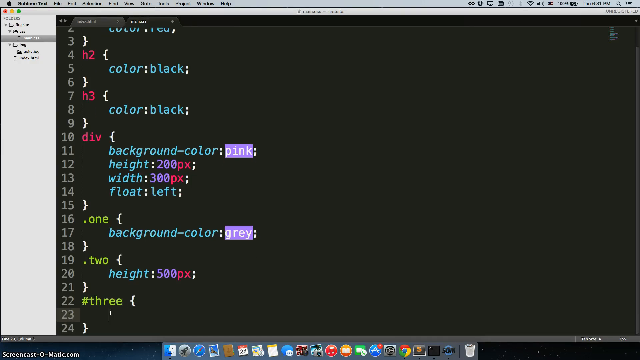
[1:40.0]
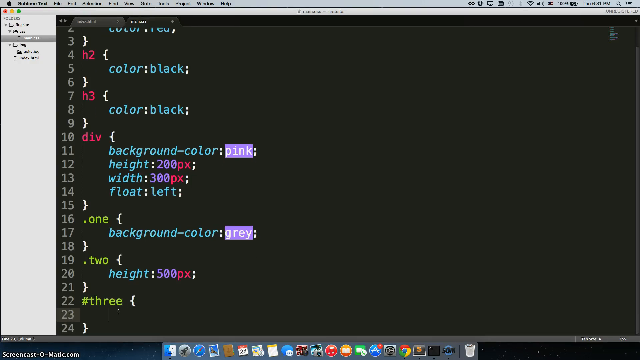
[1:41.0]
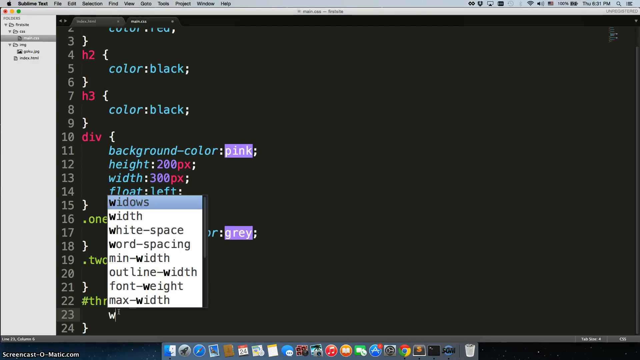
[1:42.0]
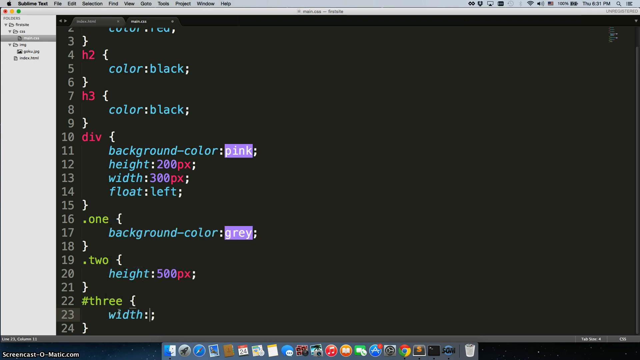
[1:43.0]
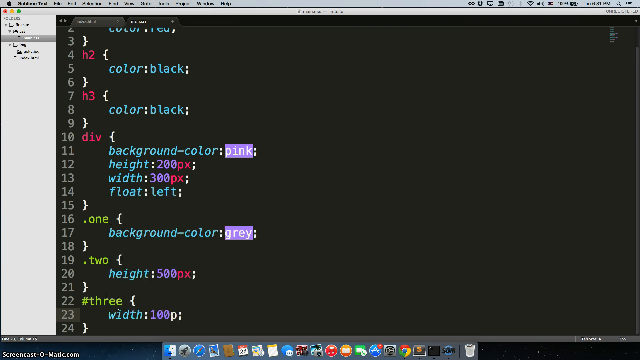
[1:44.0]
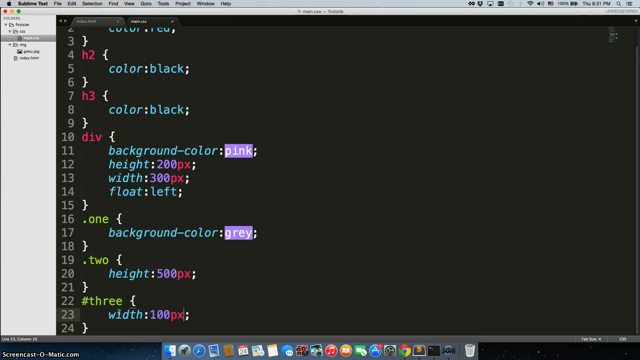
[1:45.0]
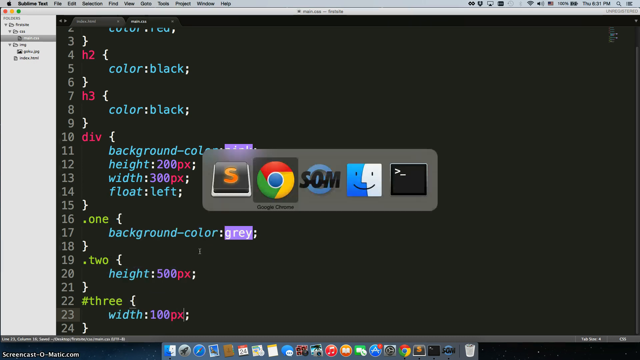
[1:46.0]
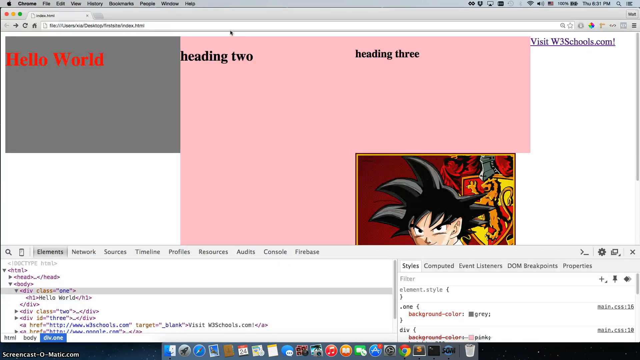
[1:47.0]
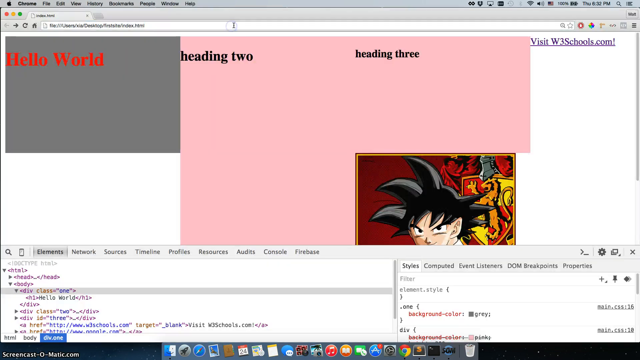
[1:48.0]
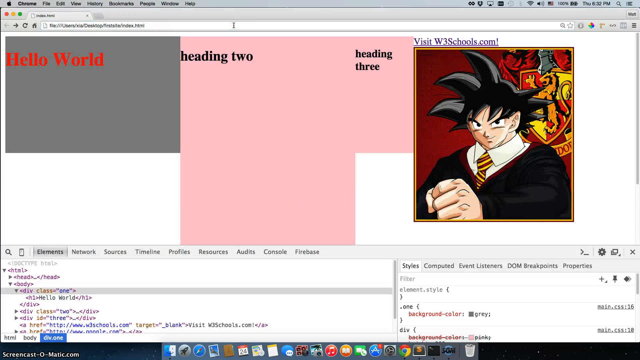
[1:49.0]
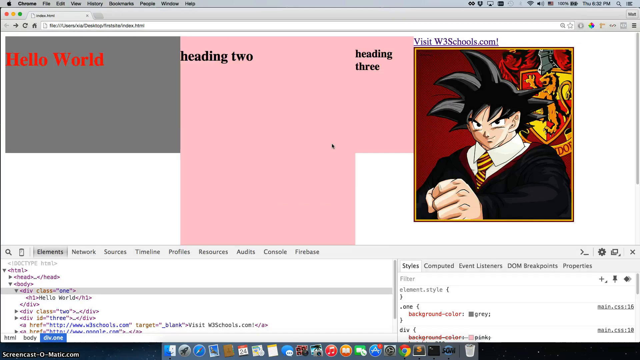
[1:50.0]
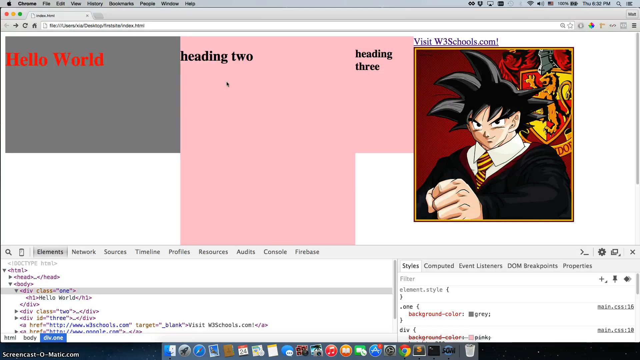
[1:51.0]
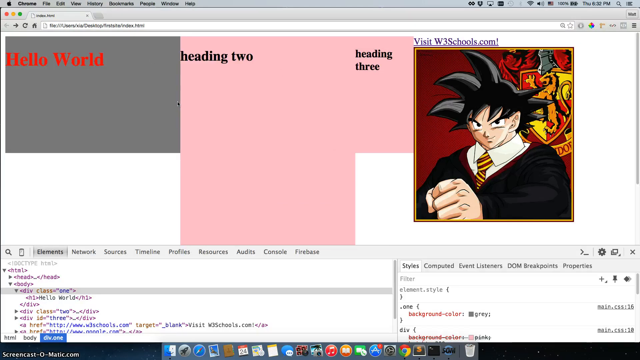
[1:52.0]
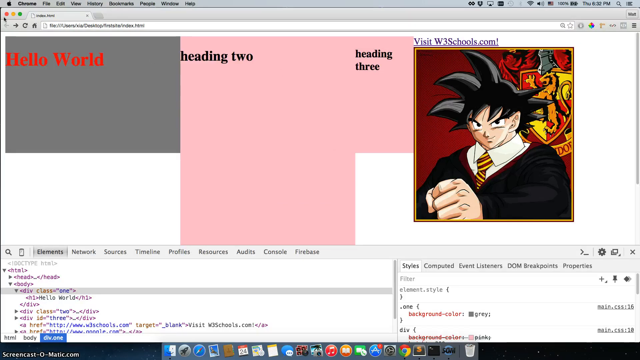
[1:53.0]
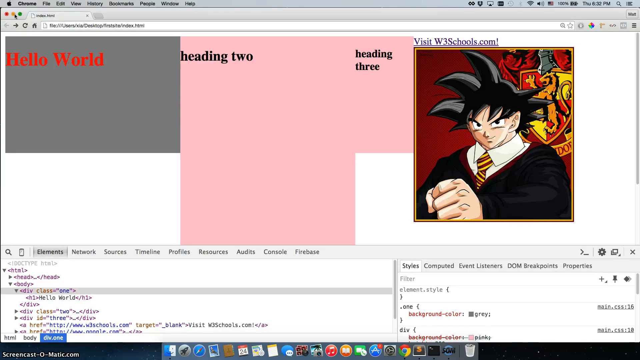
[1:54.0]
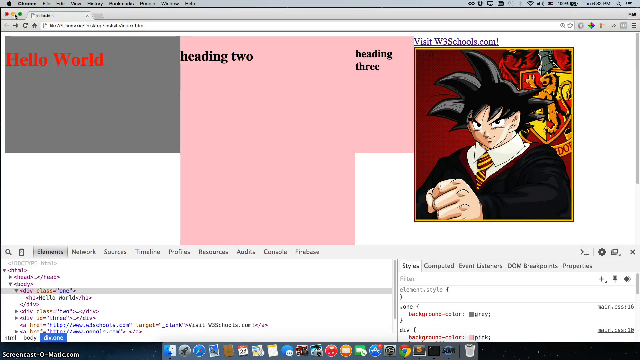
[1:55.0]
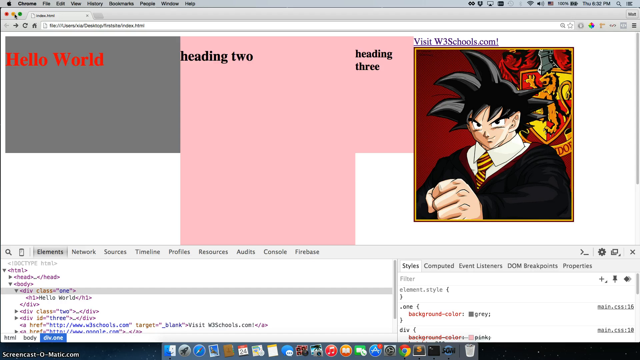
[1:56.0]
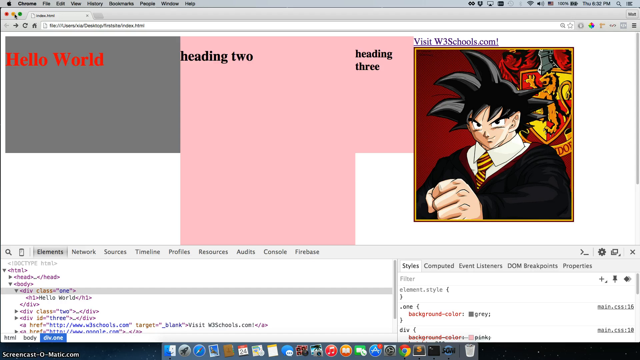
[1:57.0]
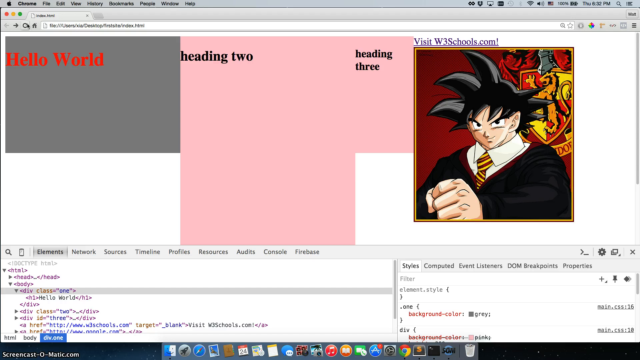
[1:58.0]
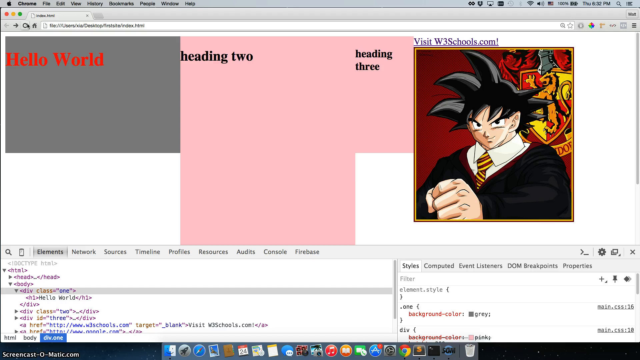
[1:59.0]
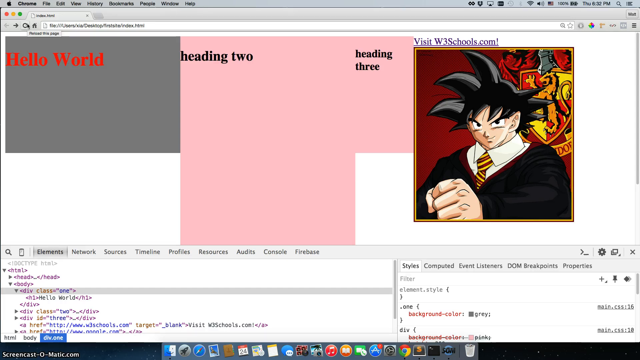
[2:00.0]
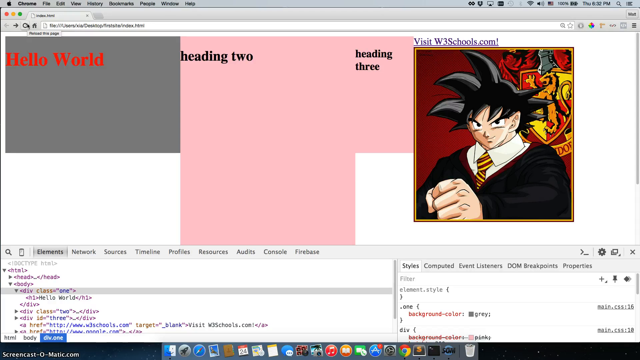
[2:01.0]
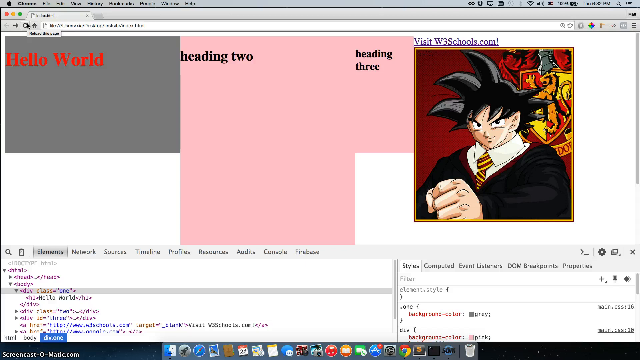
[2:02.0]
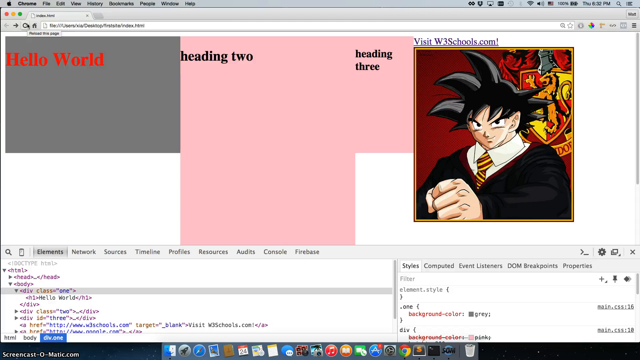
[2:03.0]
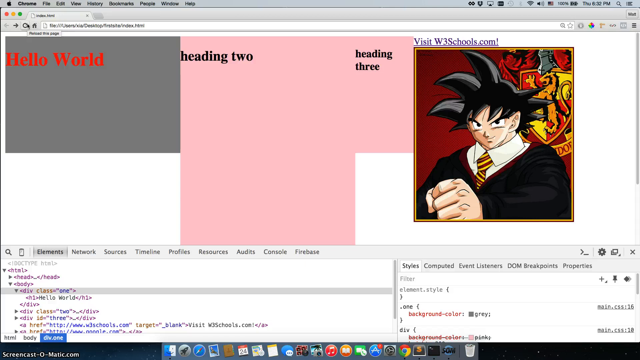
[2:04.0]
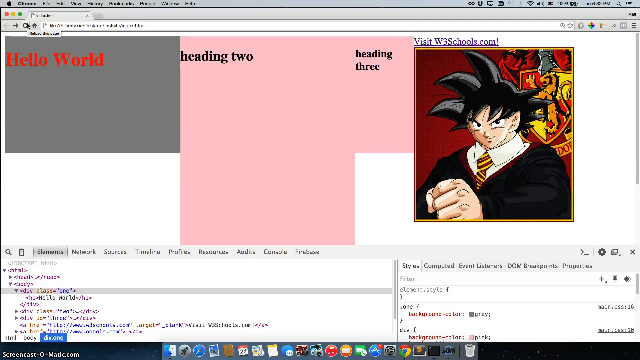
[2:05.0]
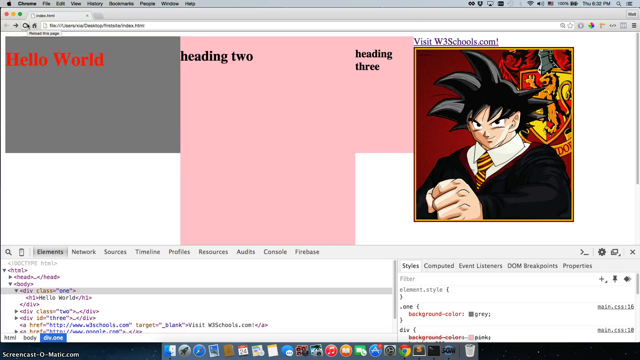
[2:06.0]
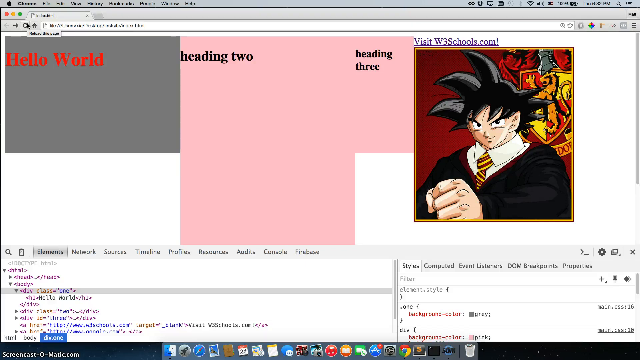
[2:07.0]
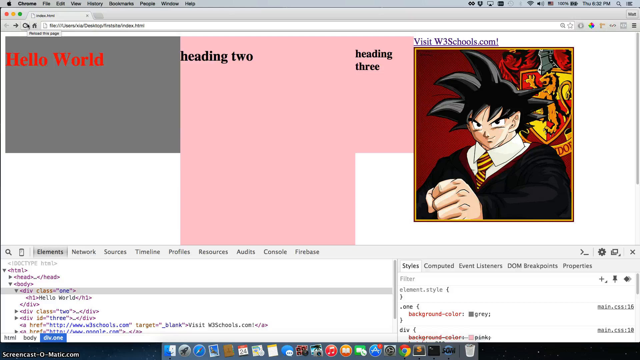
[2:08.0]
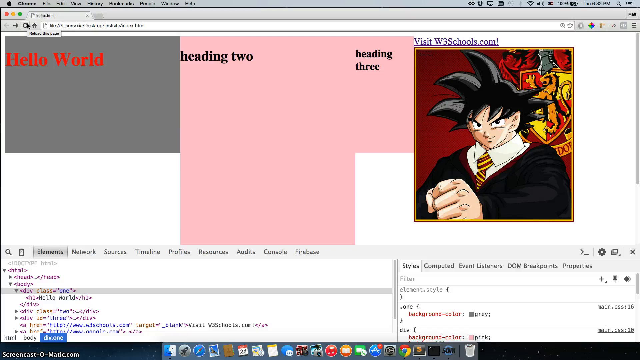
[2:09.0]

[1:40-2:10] Text is typed: width, semicolon, hundred, px, semicolon. The view switches to the Google Chrome window, where the text is pasted into the text bar, and the background of the cartoon character changes. A symbol with a lion is visible, along with another item, and the fist of the character appears. The Chrome window shows columns: "Hello World" in a grey text box, and two text boxes with pink backgrounds, one heading two and the other heading three. The cartoon character is next to them. The view then switches back to the original coding window, where the video stops.